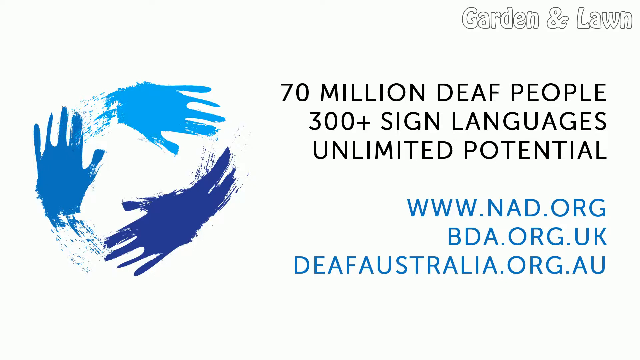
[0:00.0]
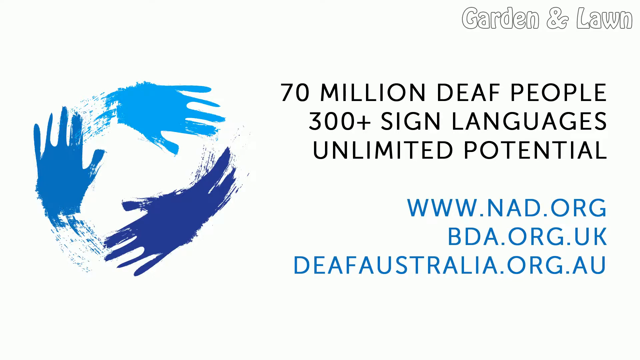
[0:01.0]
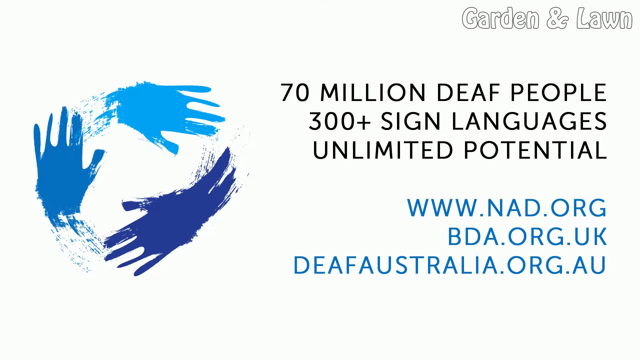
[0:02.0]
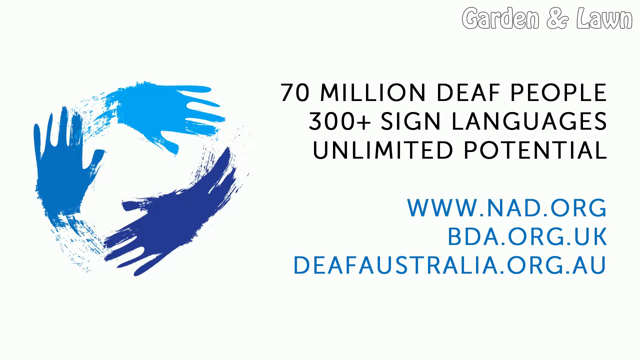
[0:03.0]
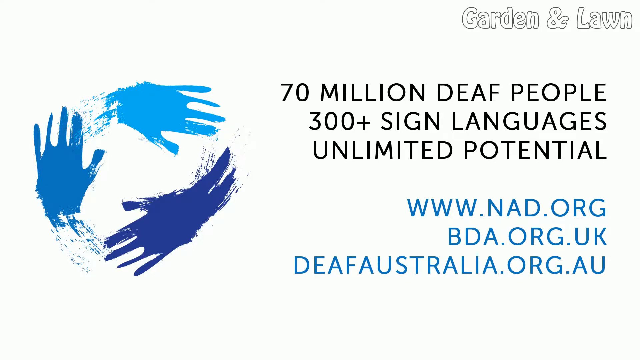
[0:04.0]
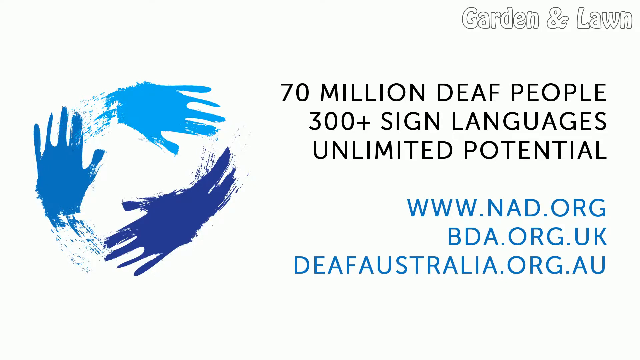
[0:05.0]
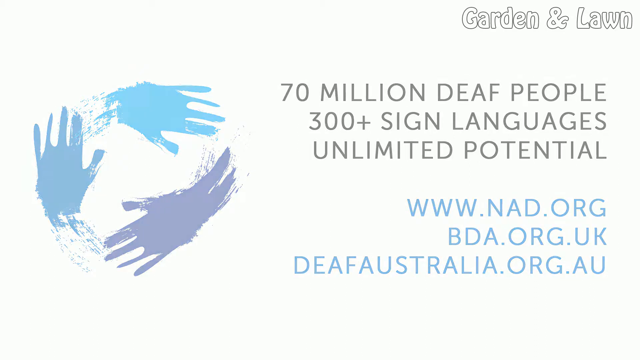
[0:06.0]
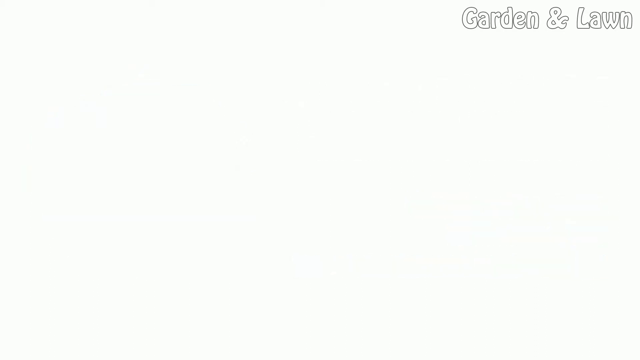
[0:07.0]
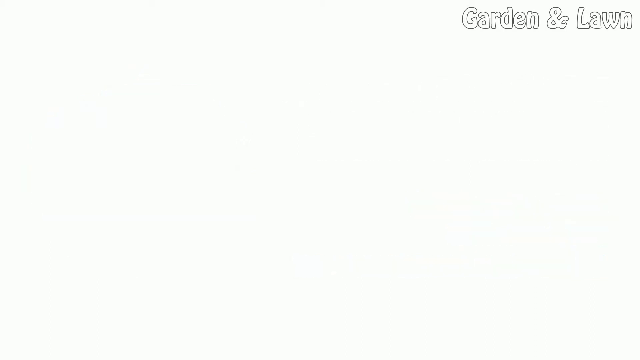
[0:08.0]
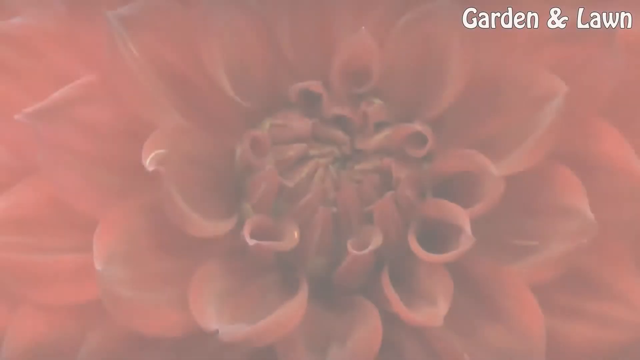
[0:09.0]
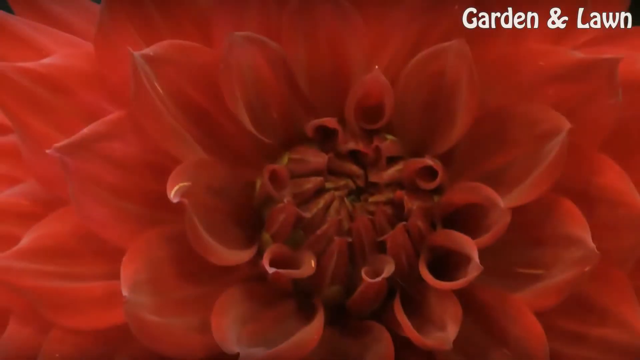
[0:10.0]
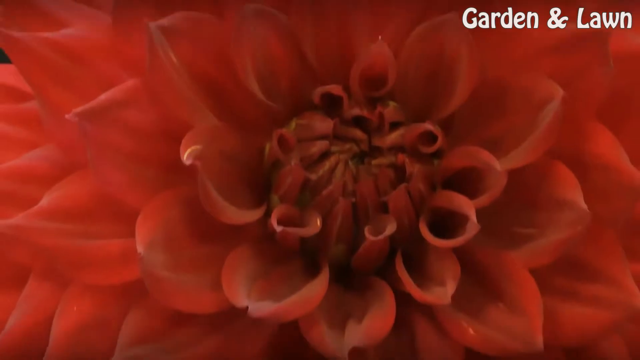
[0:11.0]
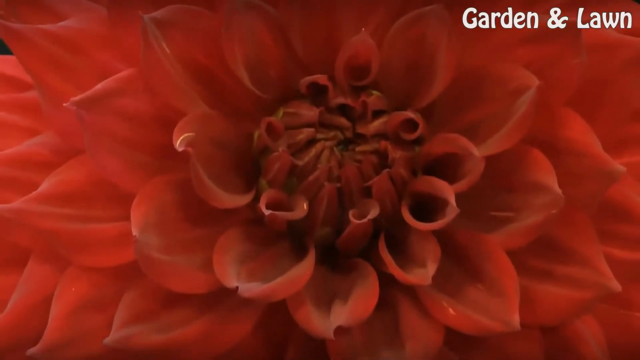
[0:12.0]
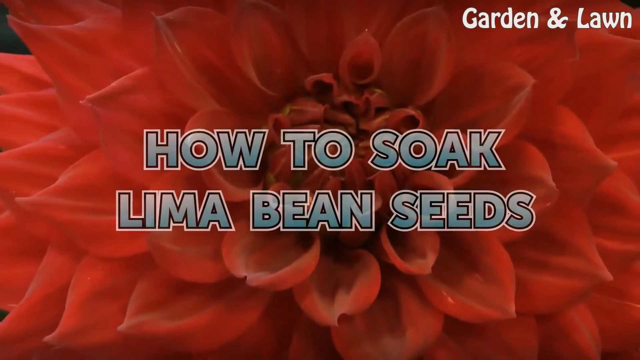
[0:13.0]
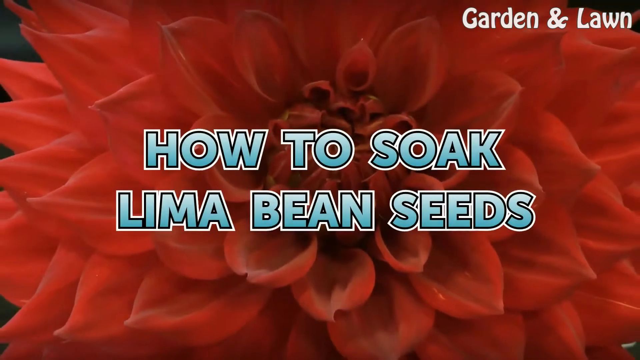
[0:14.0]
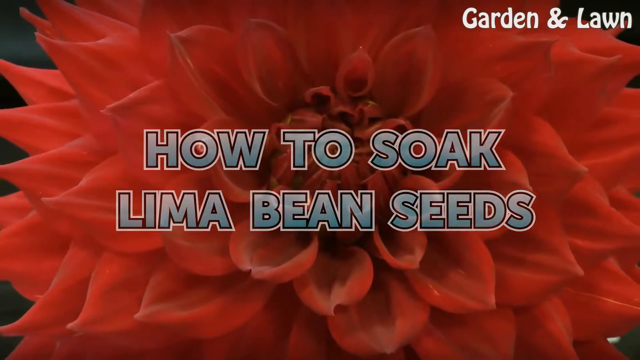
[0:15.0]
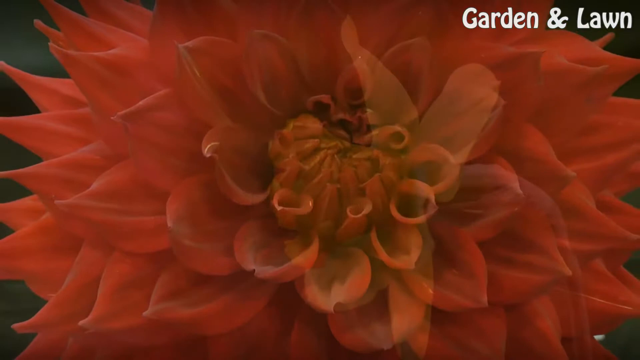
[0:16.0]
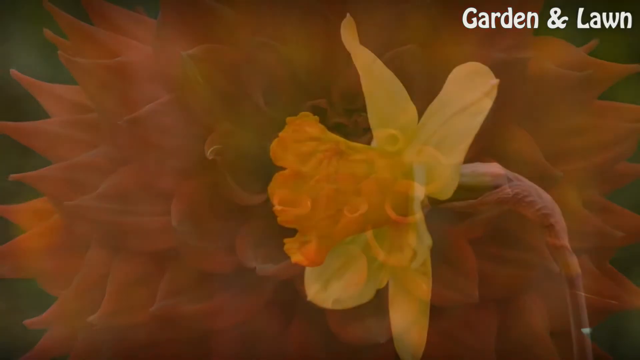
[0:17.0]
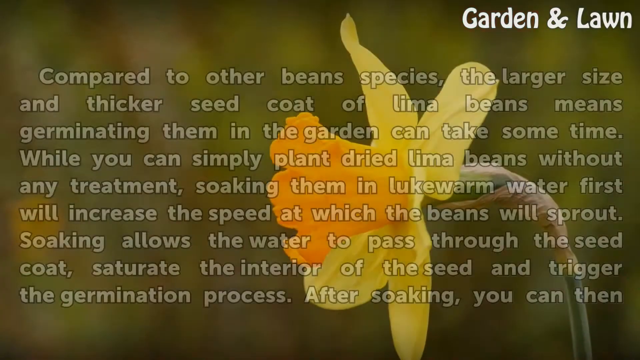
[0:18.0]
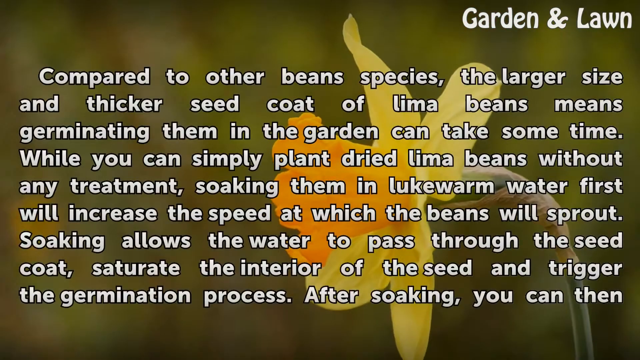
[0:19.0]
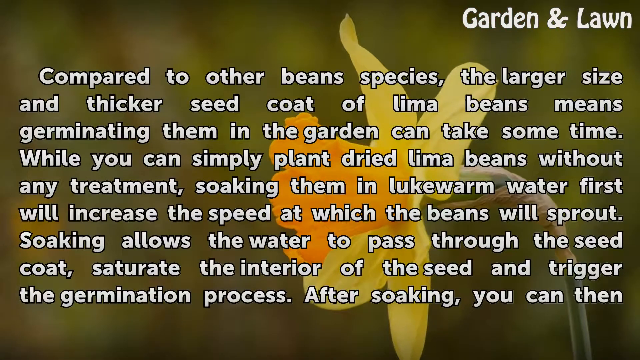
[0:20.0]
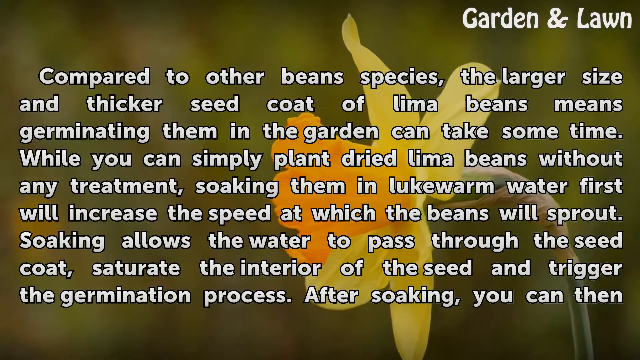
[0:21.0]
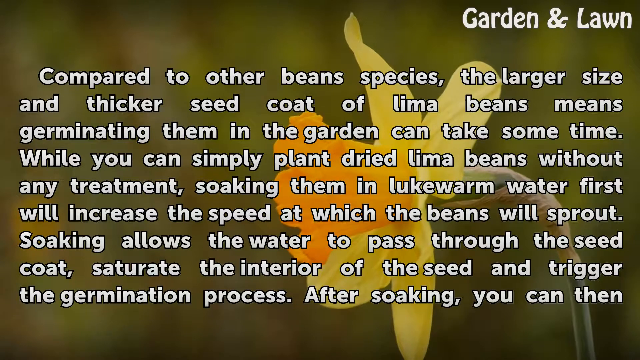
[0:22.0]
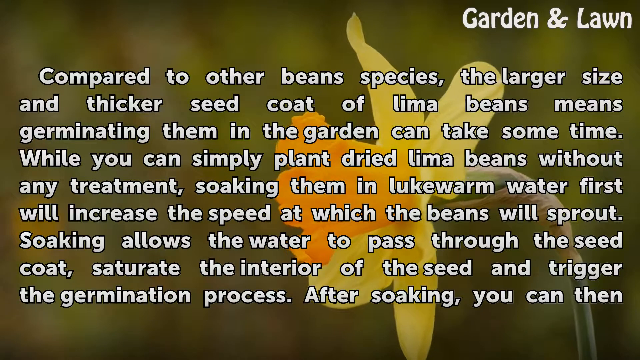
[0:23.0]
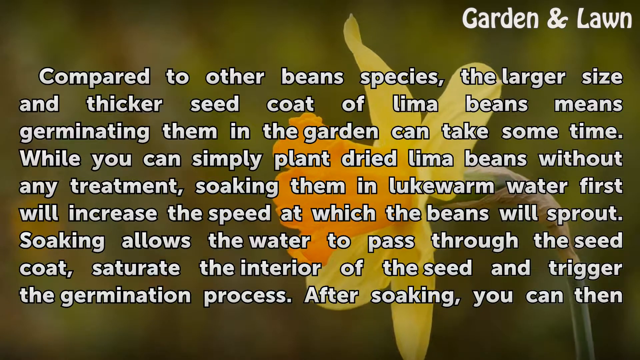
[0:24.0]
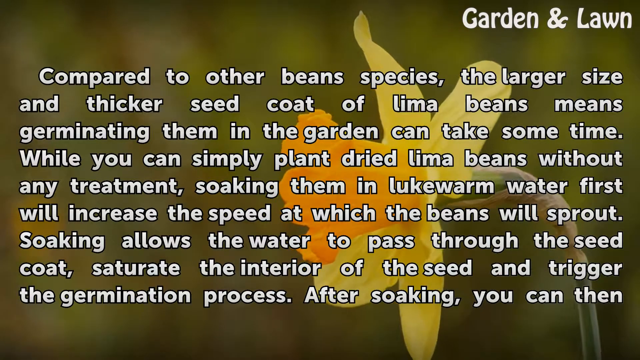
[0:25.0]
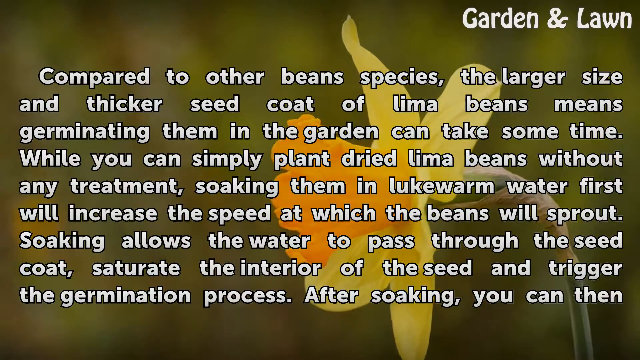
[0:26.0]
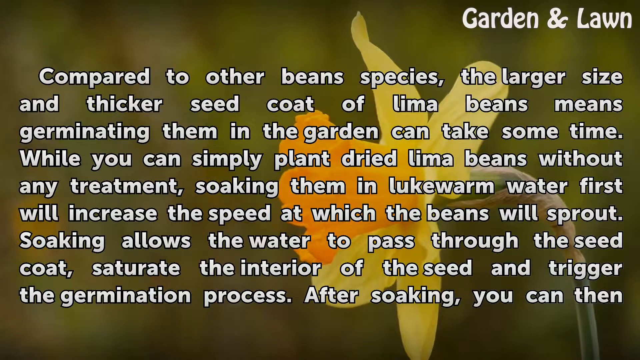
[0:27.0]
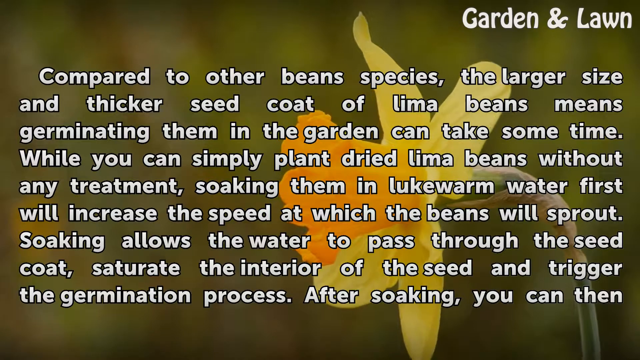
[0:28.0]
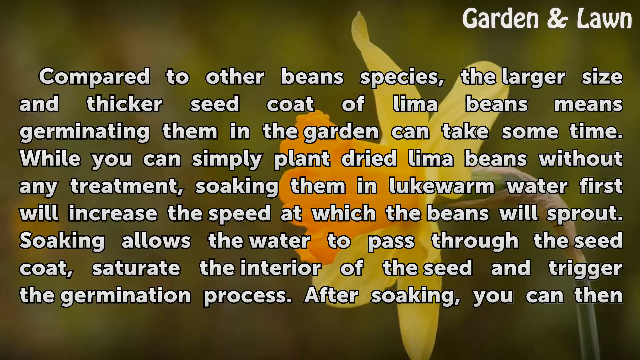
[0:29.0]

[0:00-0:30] The video begins with the words "garden and lawn" in the upper right and a message about ASL accessibility for the deaf. Next comes text about how to soak lima bean seeds, explaining that the larger and thicker seed coat of lima beans means germinating them in the garden can take some time, and offering a way around this delay. Then another ad for sign languages for deaf people appears, followed by more garden and lawn information. The colors fall largely into two separate palettes: white, blue and black when the subject is sign language, and red with white printing for garden and lawn topics. The flowers shown are red. No lima bean seed is shown, although the text refers to them. The content alternates between these two subjects, deaf people and lima beans, trading places through the video.